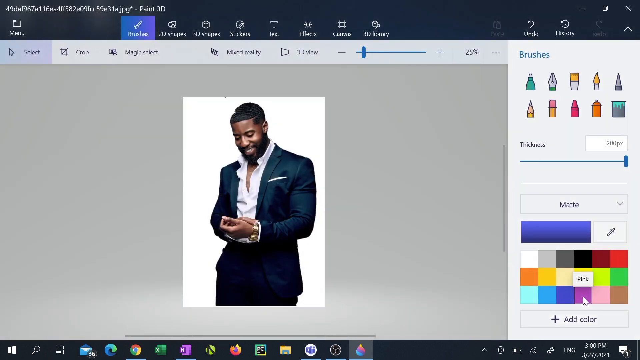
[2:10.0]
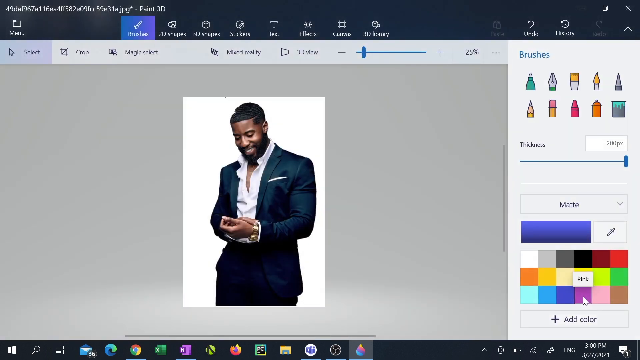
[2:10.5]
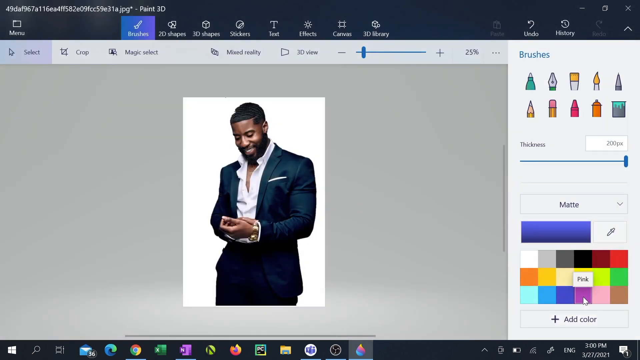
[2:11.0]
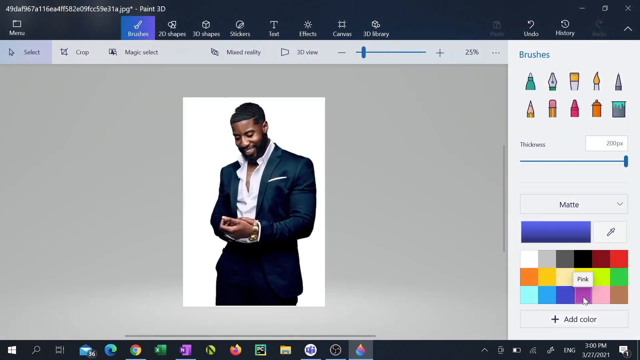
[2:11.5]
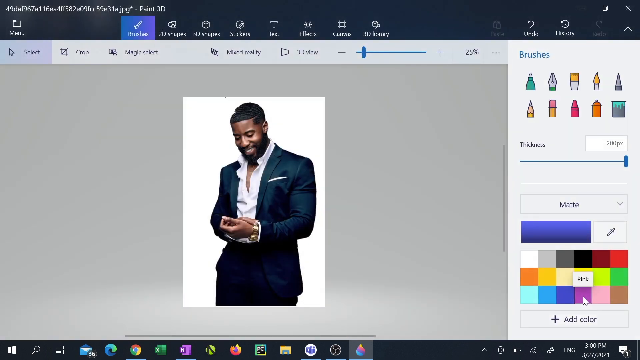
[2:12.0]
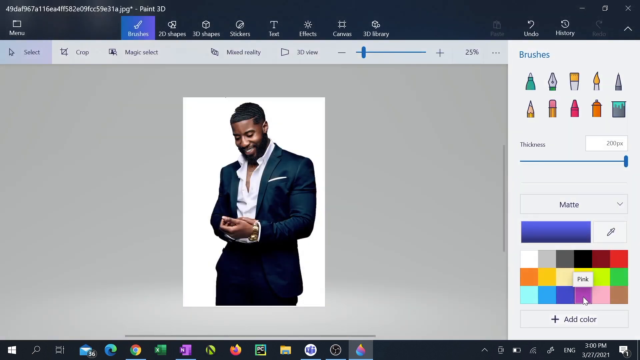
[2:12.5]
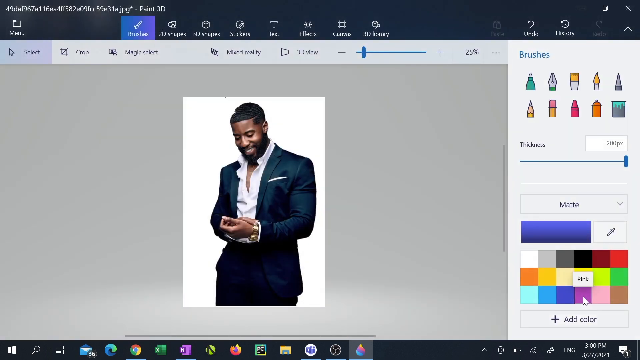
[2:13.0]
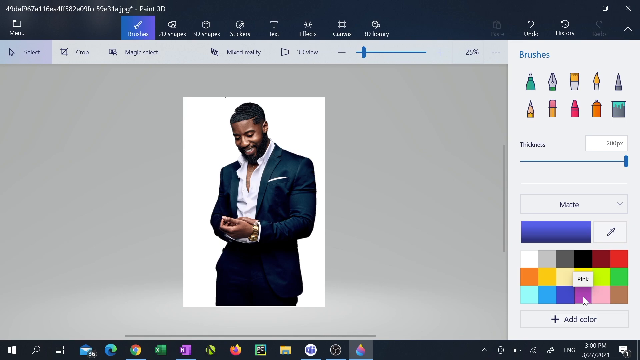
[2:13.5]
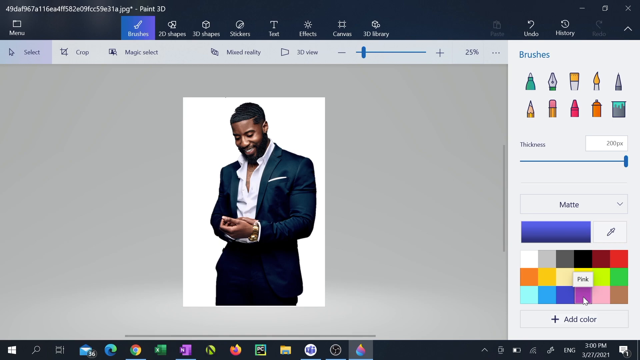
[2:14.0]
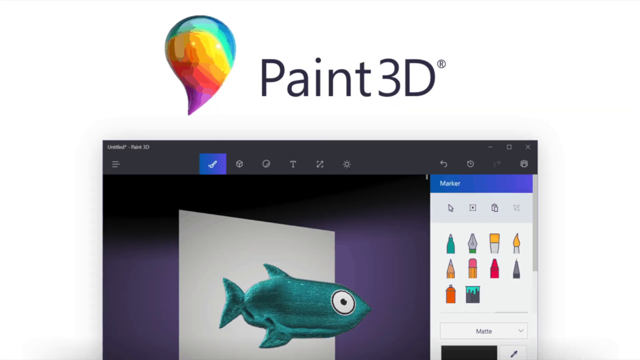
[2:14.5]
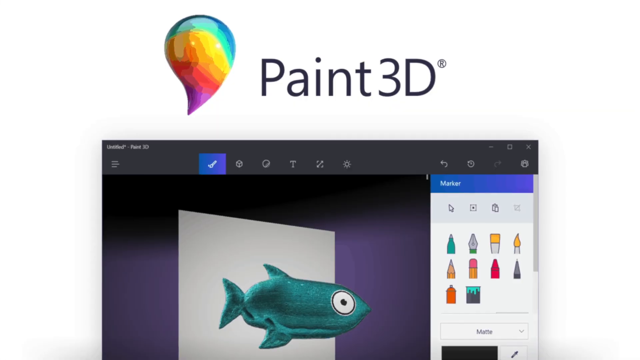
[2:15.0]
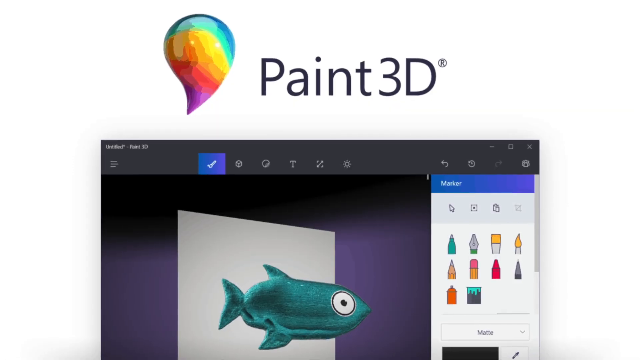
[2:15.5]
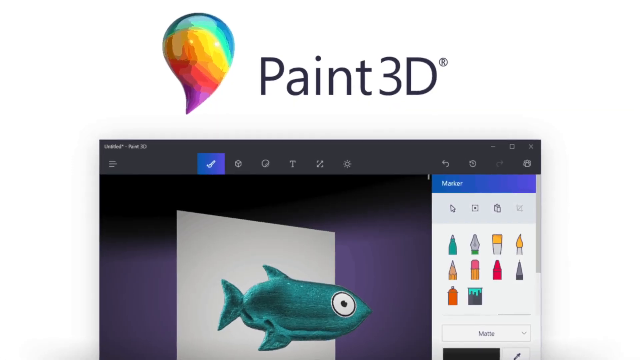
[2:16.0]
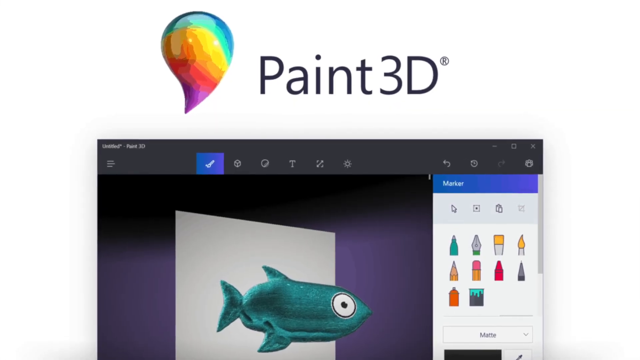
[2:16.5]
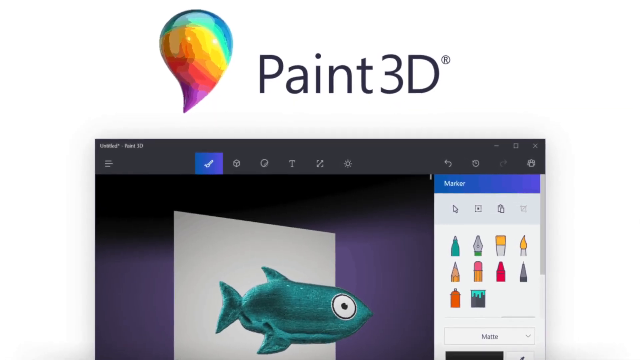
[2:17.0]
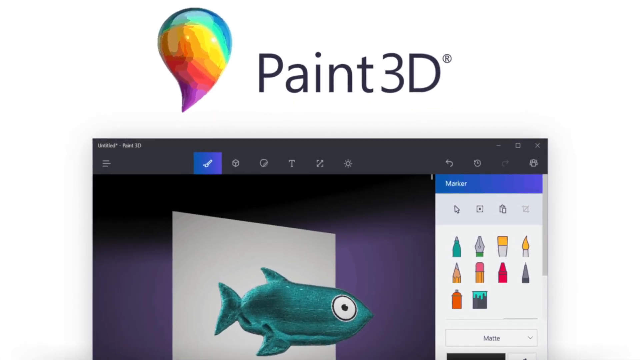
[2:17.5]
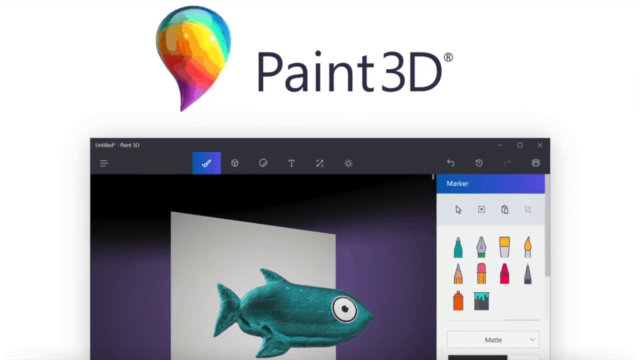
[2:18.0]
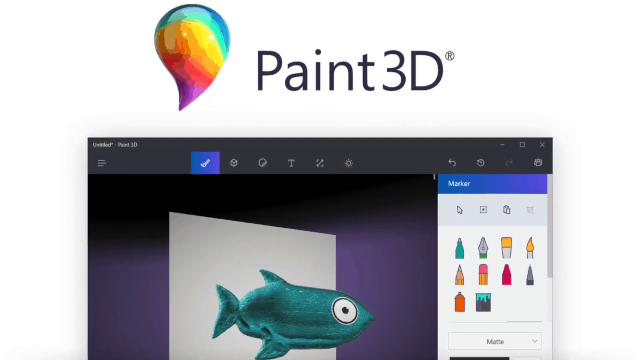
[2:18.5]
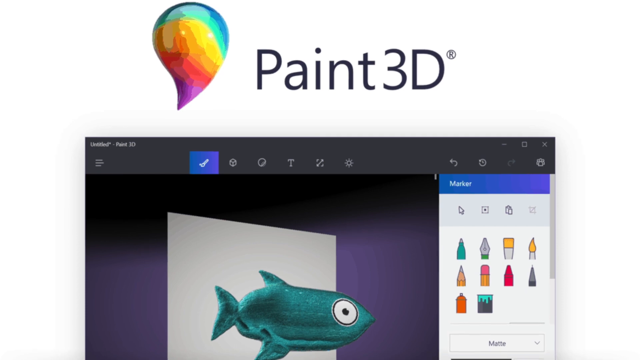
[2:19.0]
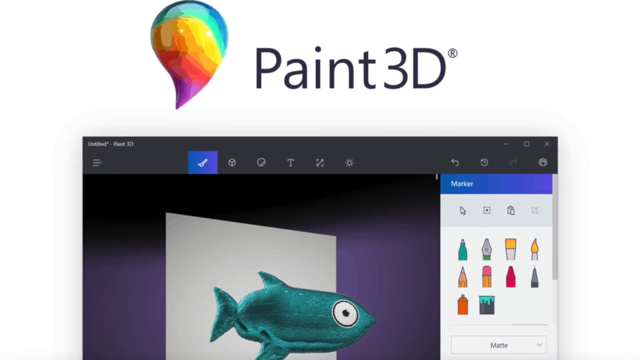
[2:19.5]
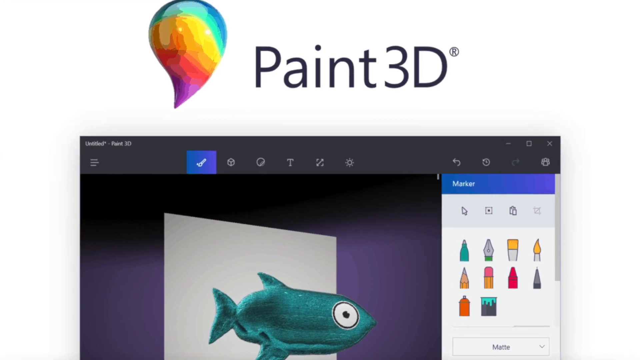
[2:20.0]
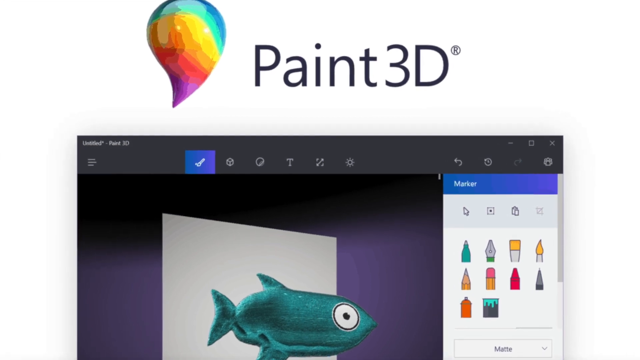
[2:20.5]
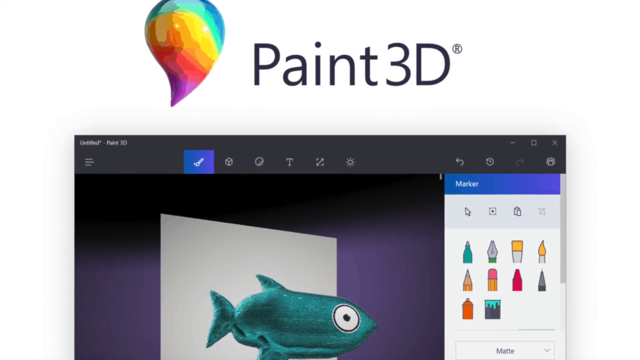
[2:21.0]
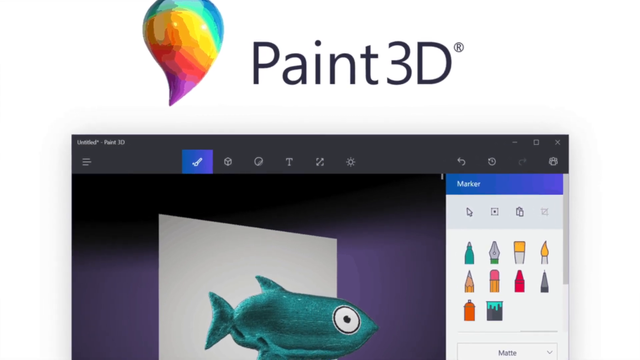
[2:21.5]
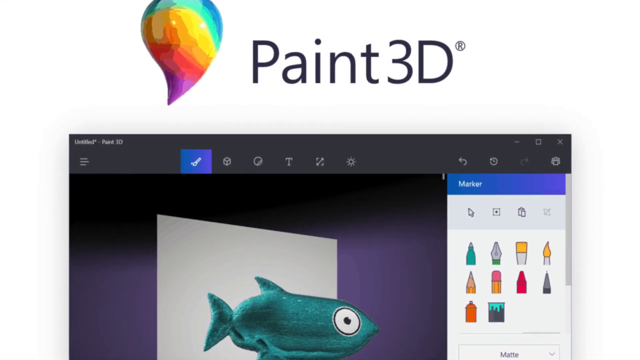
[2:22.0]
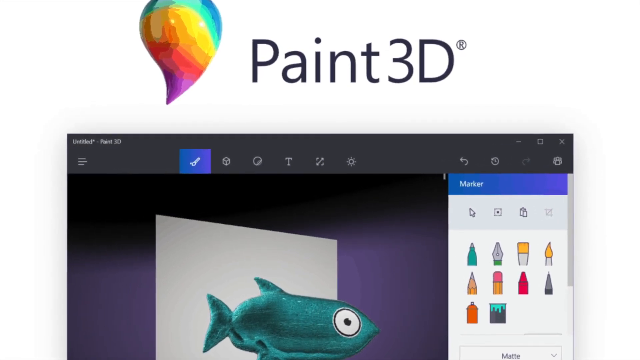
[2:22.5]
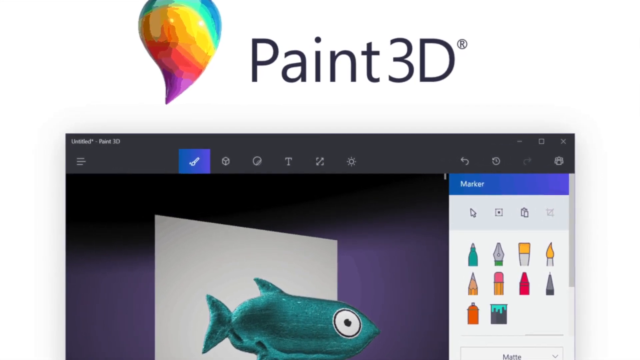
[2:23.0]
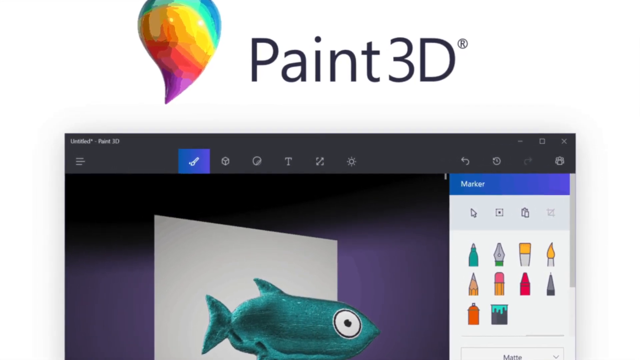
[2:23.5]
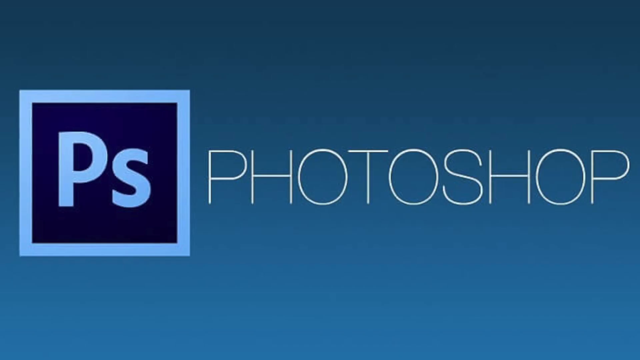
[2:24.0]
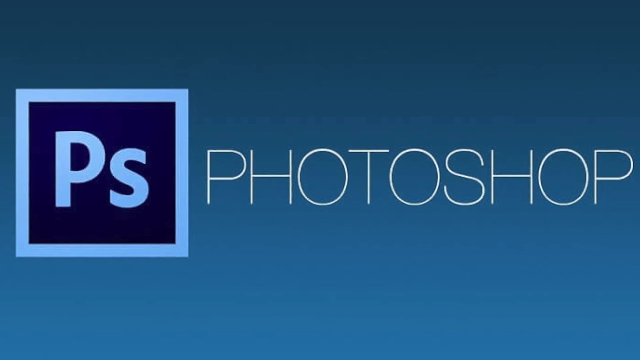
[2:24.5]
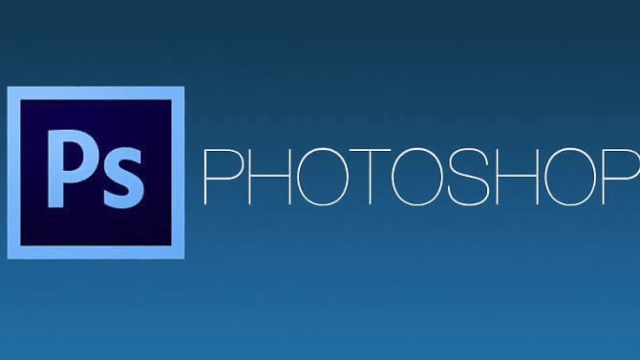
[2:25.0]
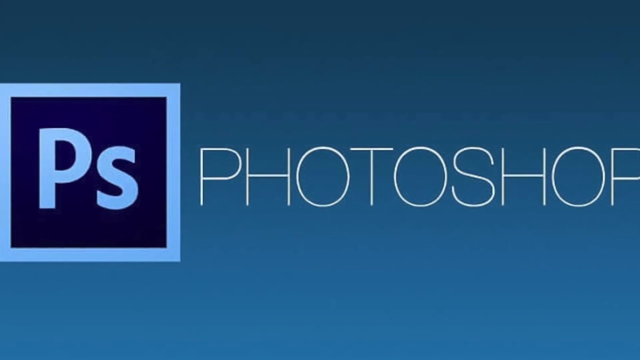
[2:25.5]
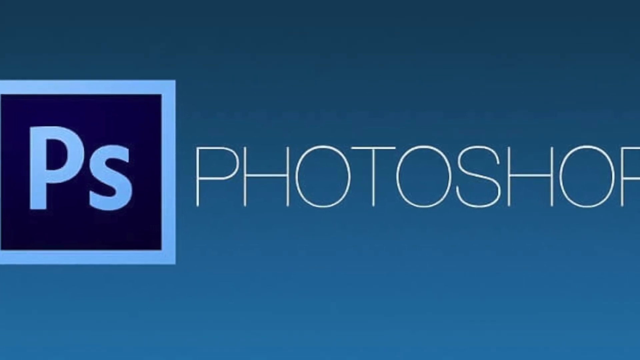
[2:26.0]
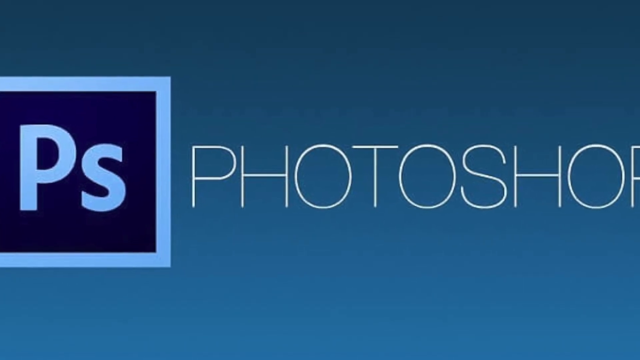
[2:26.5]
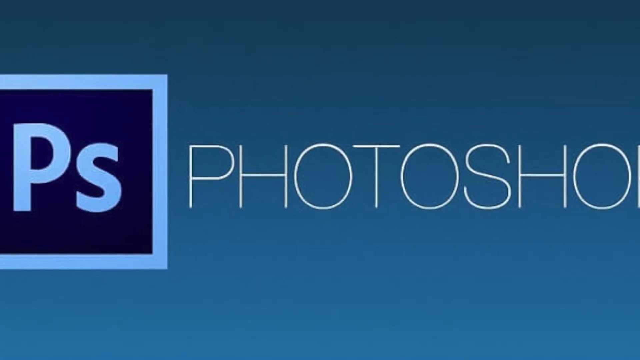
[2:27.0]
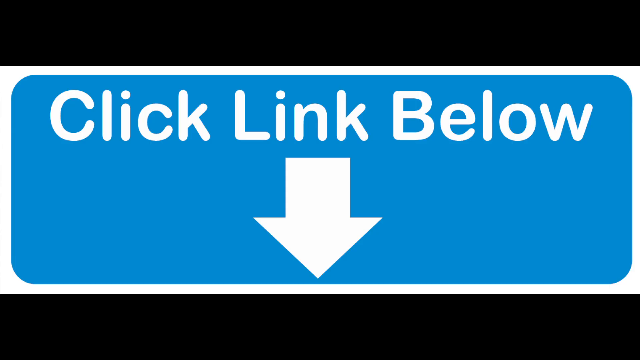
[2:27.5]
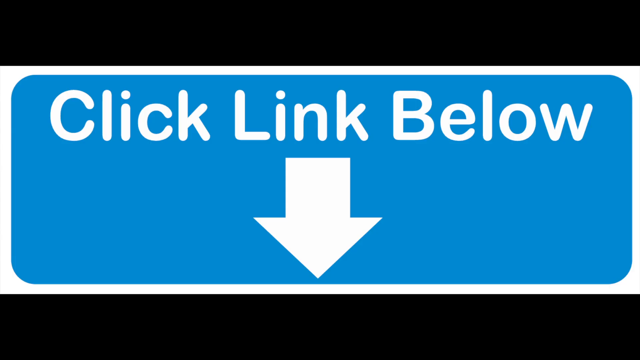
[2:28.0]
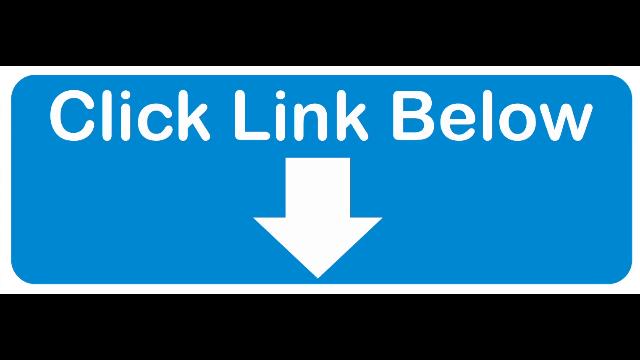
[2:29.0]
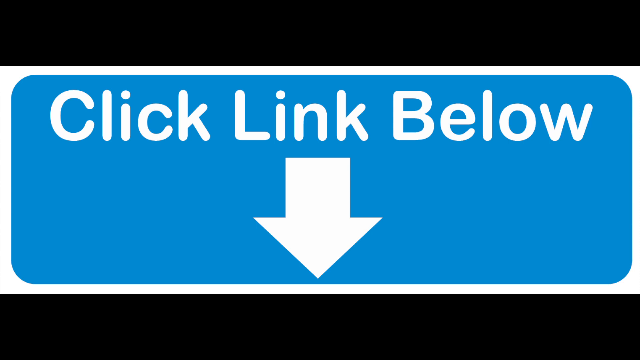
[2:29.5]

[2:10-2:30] The Paint 3D app is open with the image of the man in the navy blue suit with the white shirt, and the shot lingers for a couple of seconds. A hard transition leads to a white background with a multicoloured paint drop and a black logo next to it reading "Paint 3D"; the bottom portion of the screen shows an open Paint 3D app page with a marker tab open on the right-hand side and a picture of a fish in the middle. The view zooms in very slowly on the logo. A hard cut leads to a blue screen with a light blue PS logo: the PS text is surrounded by a light blue square with purple filler around the text, and white all-capital text next to the PS reads "Photoshop". The view zooms in on the text, and a hard transition leads to a black background with a white box outline containing a blue box with white text reading "click link below" and a down arrow.